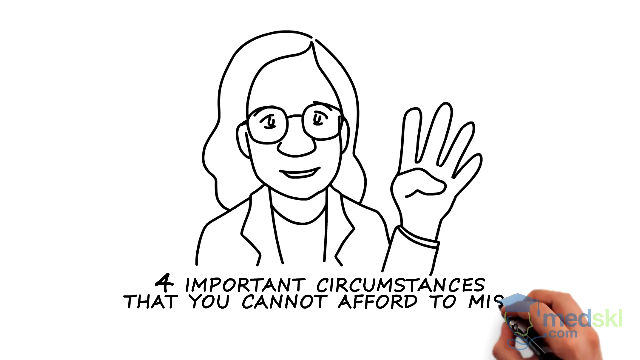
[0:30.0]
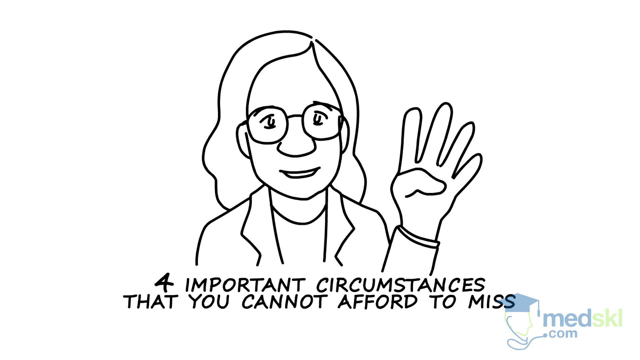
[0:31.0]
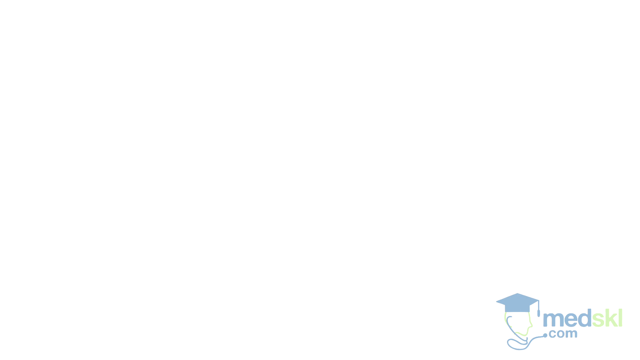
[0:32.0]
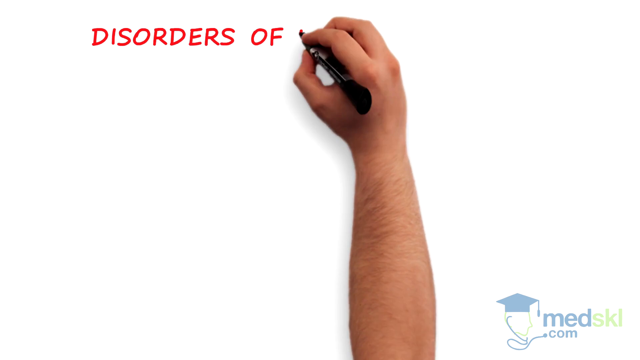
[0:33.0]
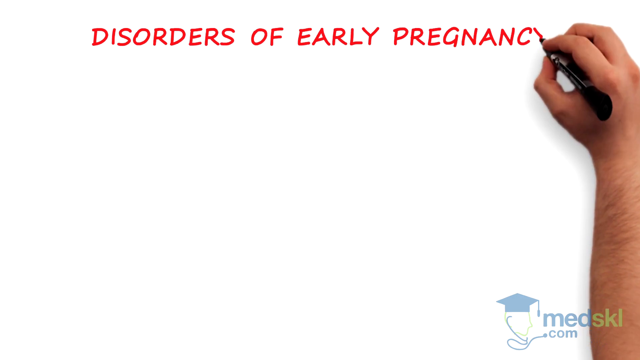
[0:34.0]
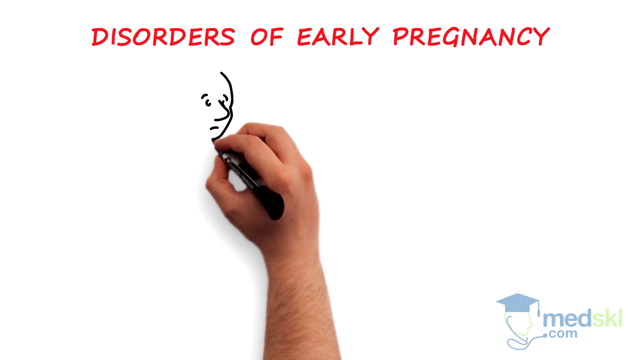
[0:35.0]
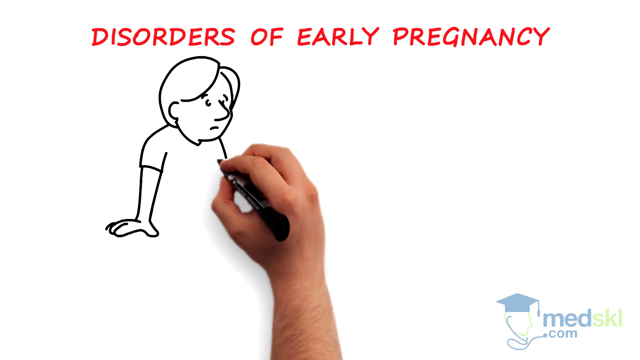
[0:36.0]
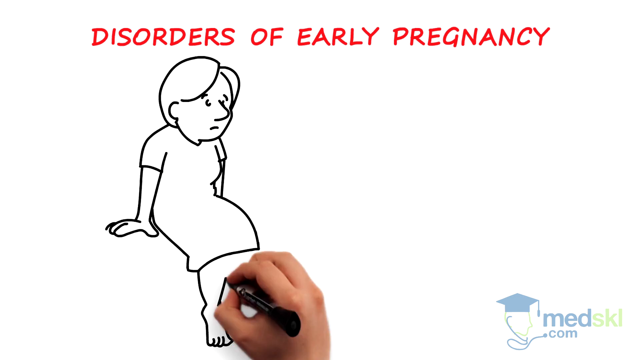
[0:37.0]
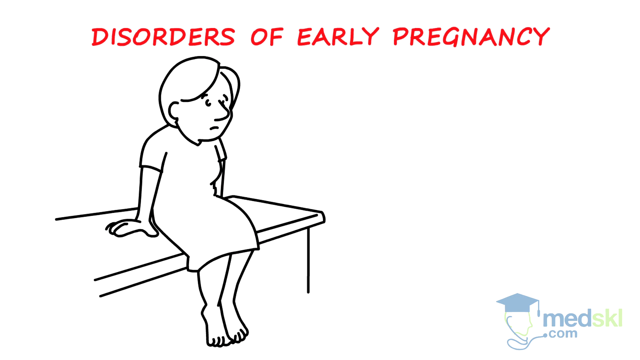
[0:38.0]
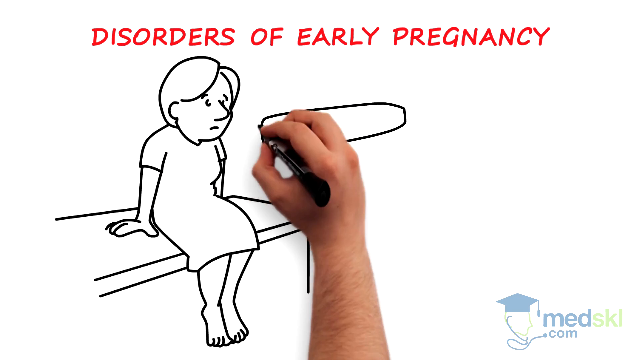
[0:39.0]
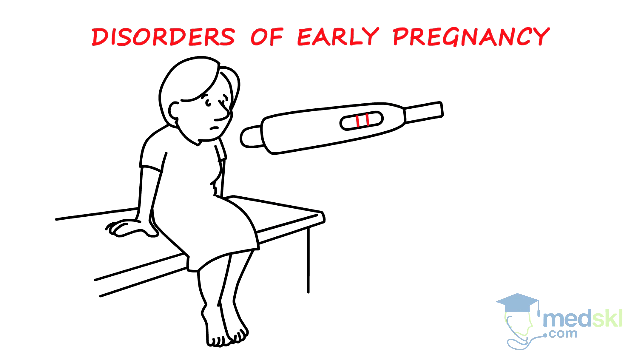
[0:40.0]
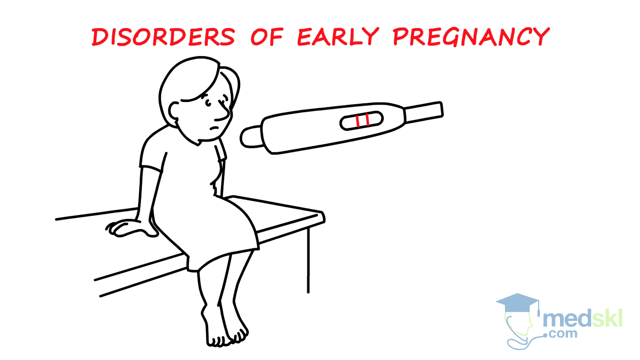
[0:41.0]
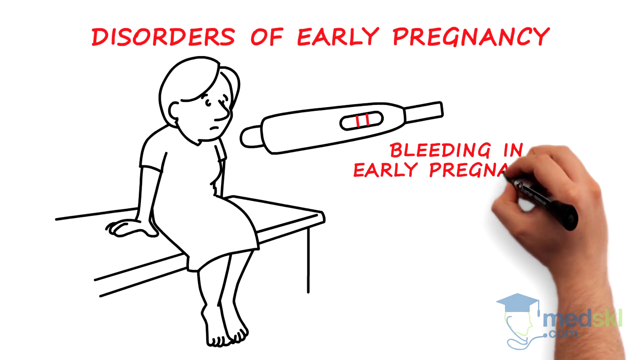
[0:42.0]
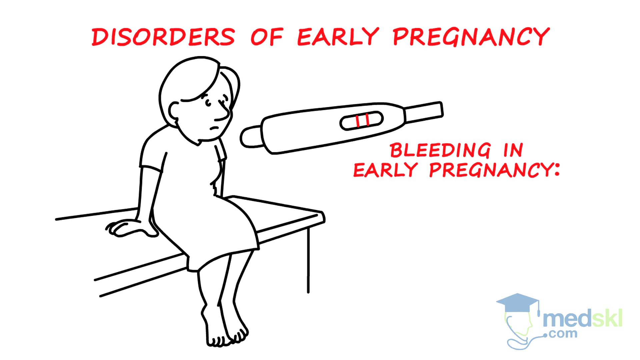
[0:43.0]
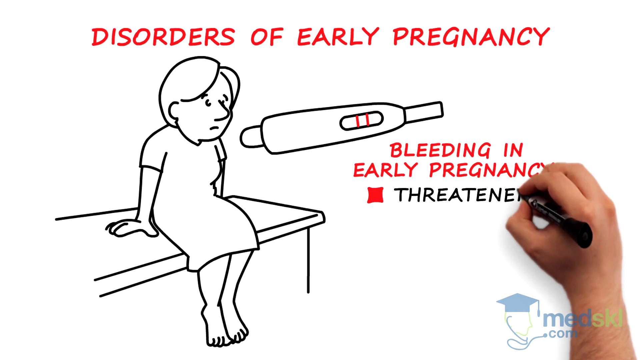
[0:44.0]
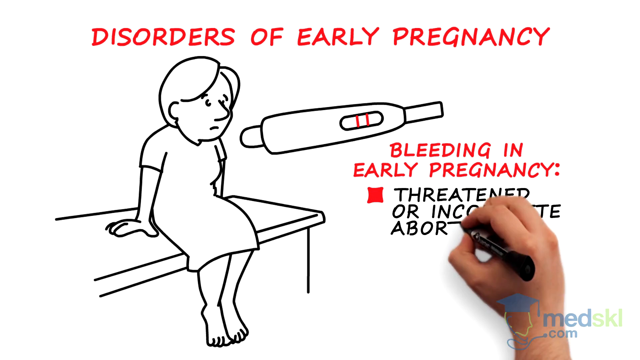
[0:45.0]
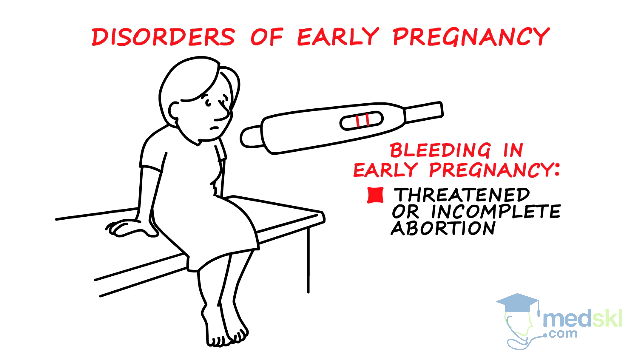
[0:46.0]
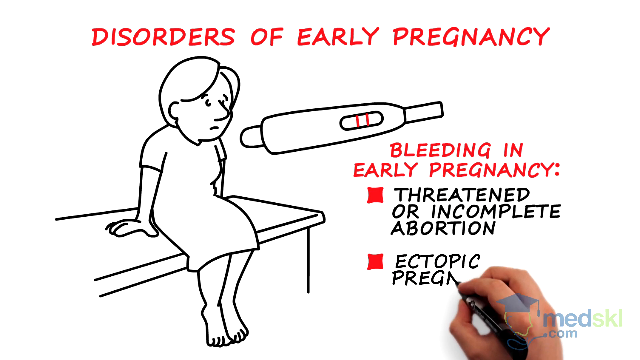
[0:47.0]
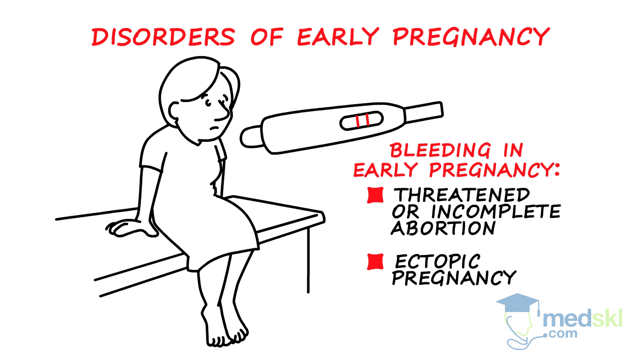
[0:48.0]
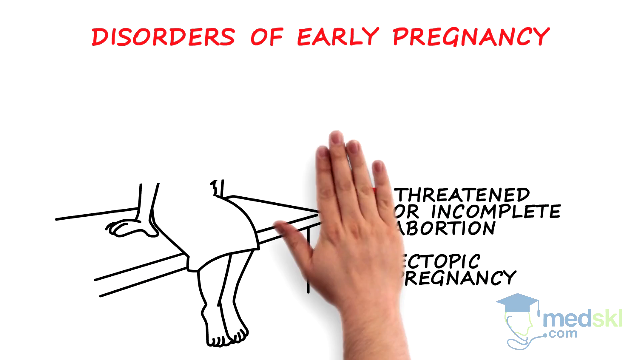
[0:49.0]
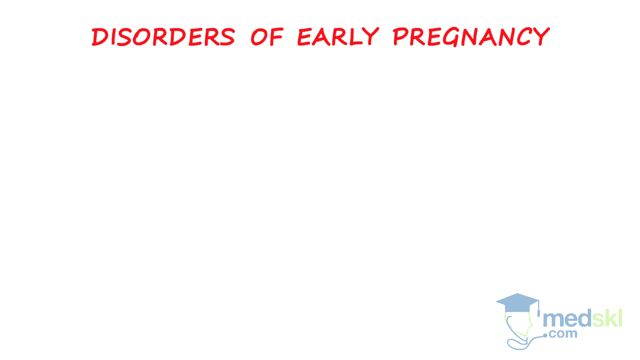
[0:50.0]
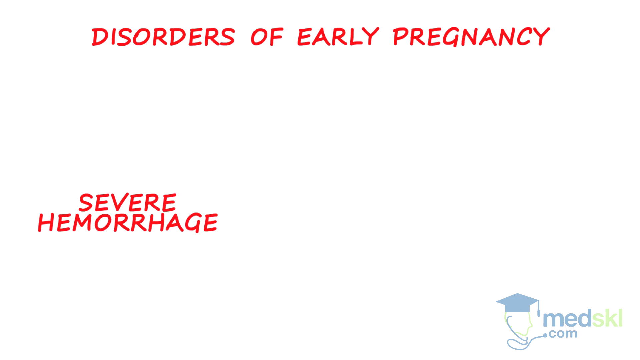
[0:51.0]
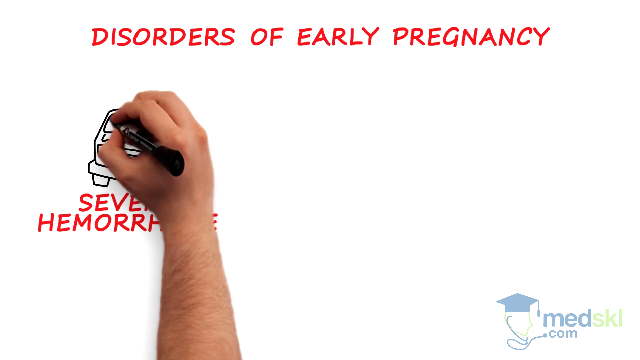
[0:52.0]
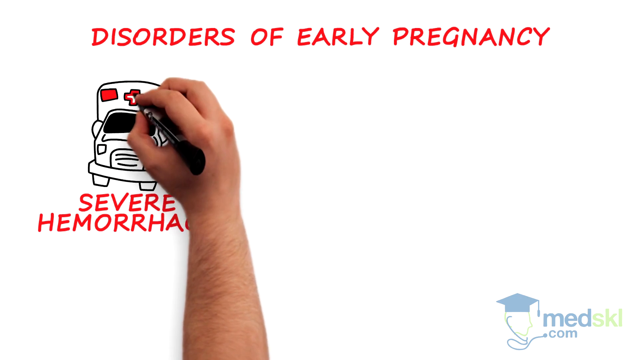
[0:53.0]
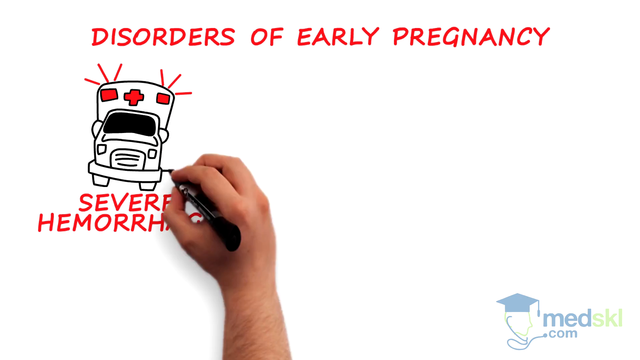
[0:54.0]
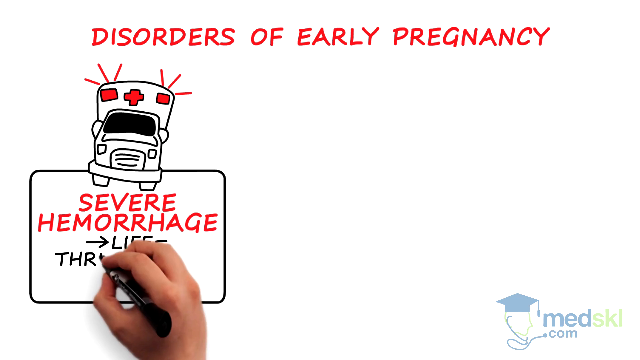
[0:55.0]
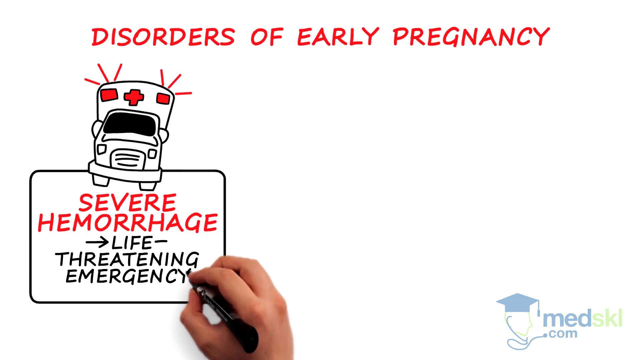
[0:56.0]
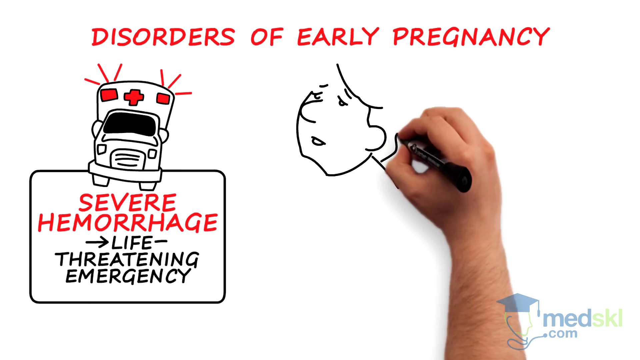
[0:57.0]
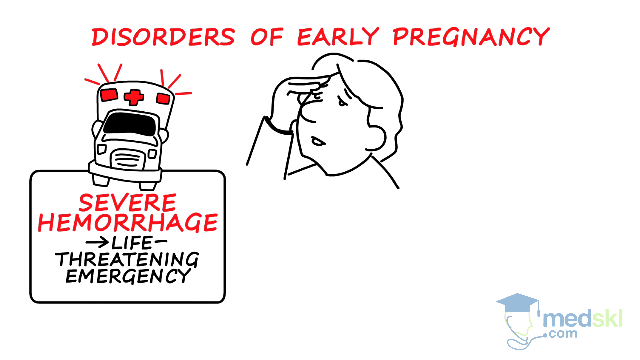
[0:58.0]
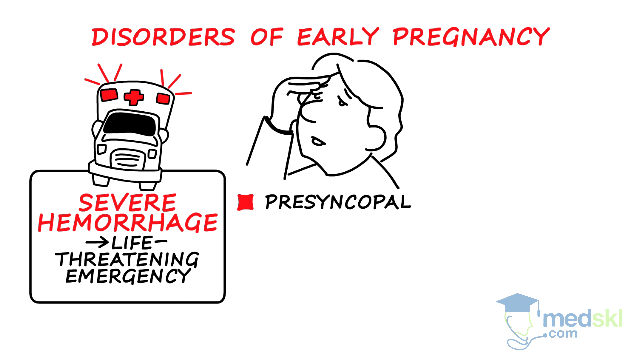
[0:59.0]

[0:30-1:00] The view moves downward to a blank white screen, and the hand writes "disorders of early pregnancy" in red letters at the top. The hand draws a woman in a medical gown sitting on a medical table; she looks worried. A pregnancy test is drawn to her right. The hand writes "bleeding in early pregnancy" and then bullet points: first "threatened or incomplete abortion," second "ectopic pregnancy." The hand then erases the woman and all the information, leaving the title "disorders of early pregnancy" in place. On the left side it writes "severe hemorrhage," draws an ambulance above it, and writes "life threatening emergency" below it. To the right, the hand draws a woman who looks very worried, her right hand placed on her forehead, and beneath this drawing writes the word "presyncopal."